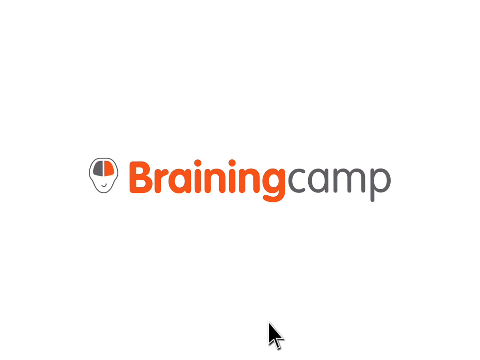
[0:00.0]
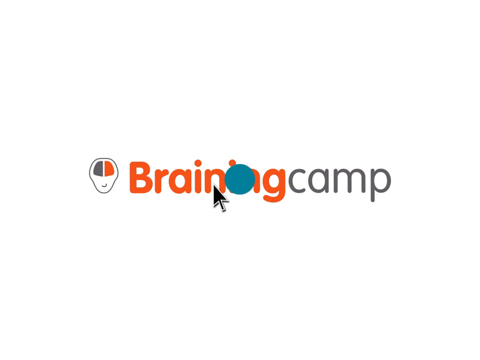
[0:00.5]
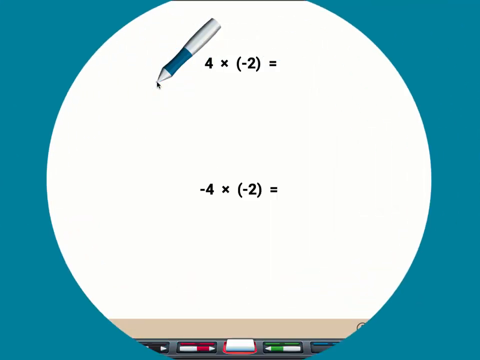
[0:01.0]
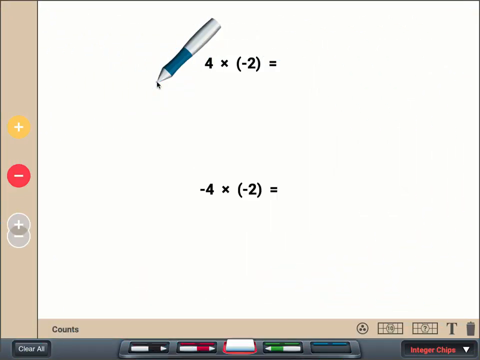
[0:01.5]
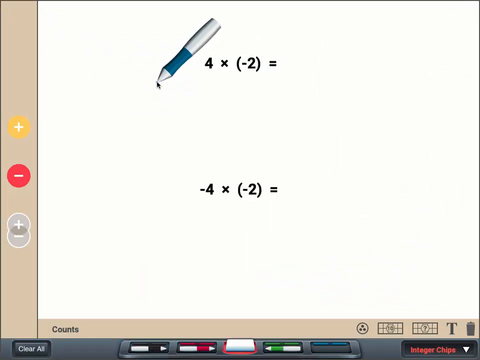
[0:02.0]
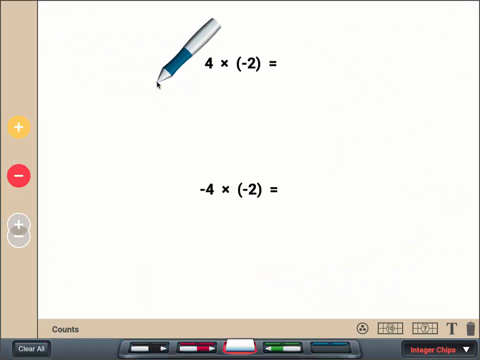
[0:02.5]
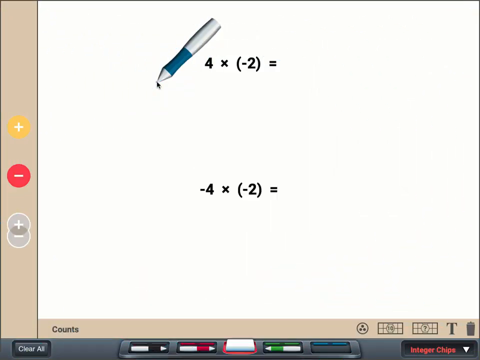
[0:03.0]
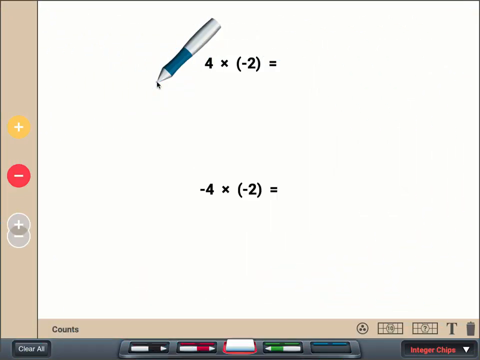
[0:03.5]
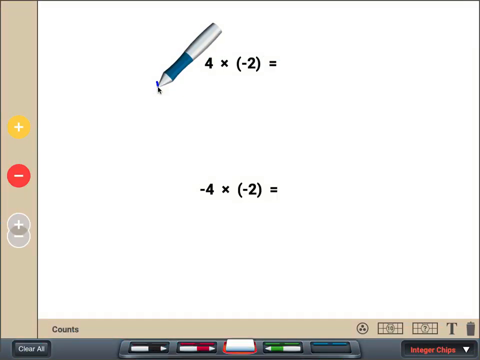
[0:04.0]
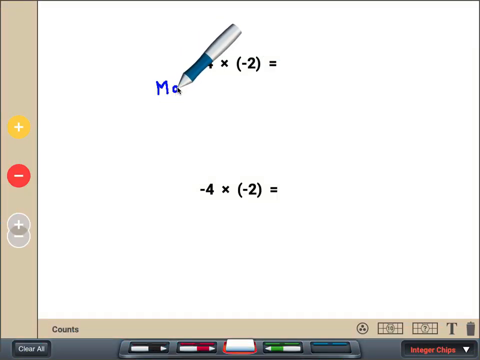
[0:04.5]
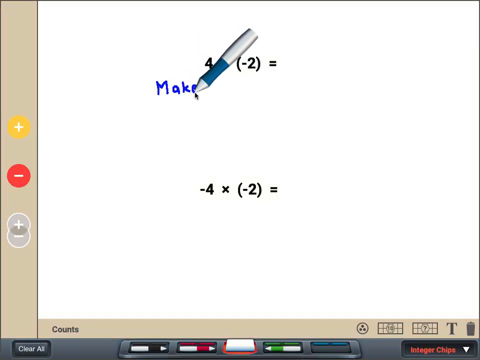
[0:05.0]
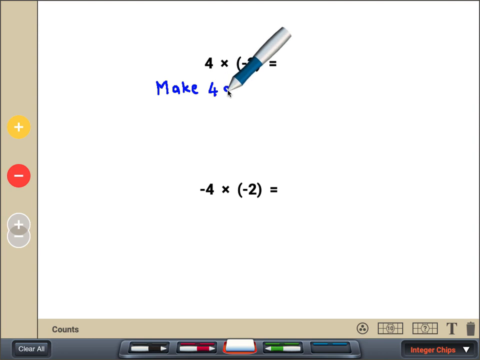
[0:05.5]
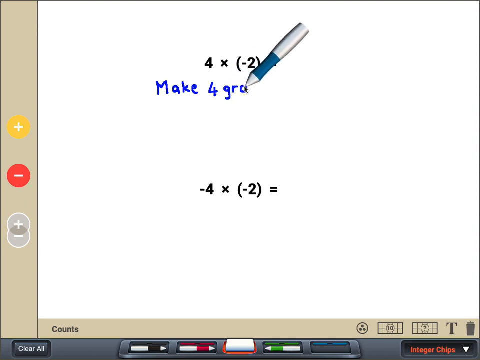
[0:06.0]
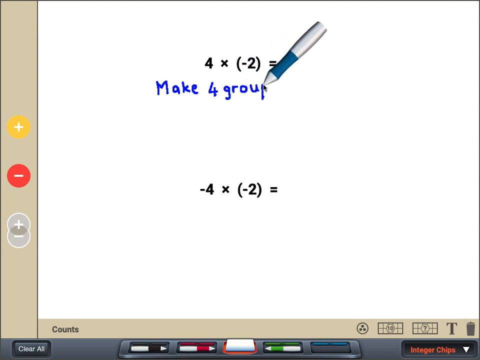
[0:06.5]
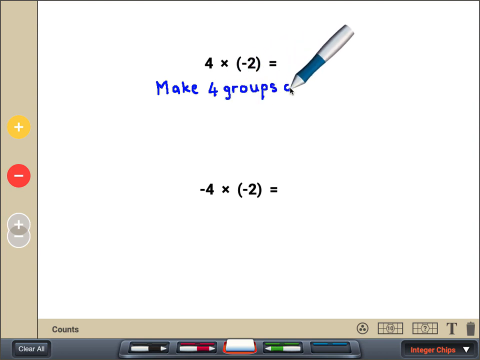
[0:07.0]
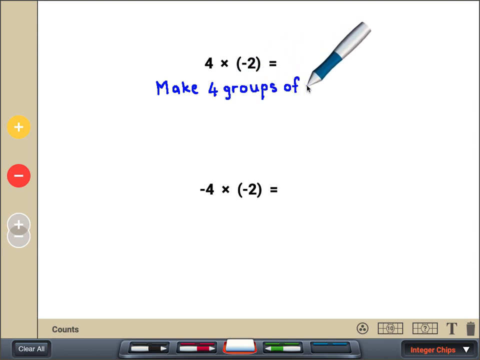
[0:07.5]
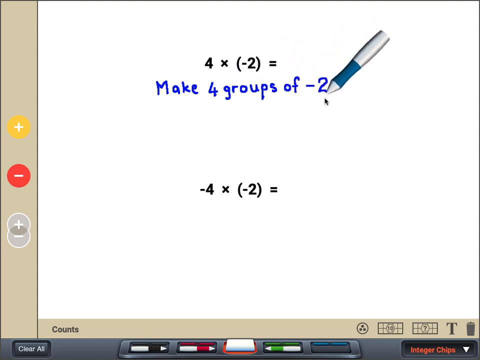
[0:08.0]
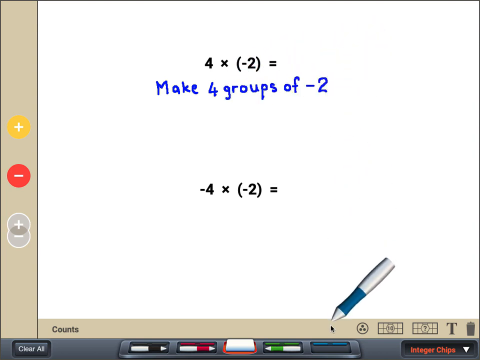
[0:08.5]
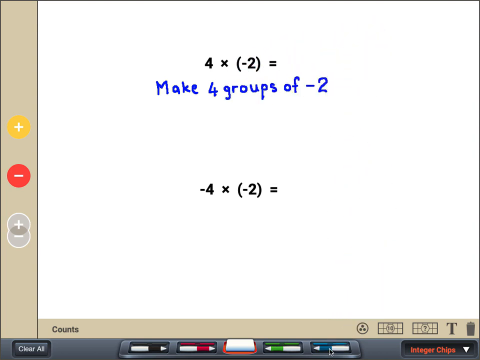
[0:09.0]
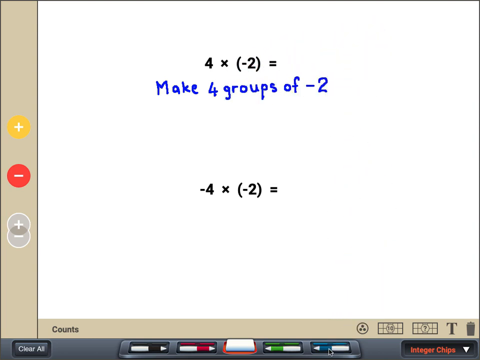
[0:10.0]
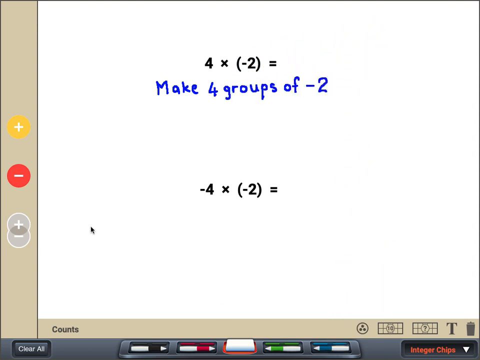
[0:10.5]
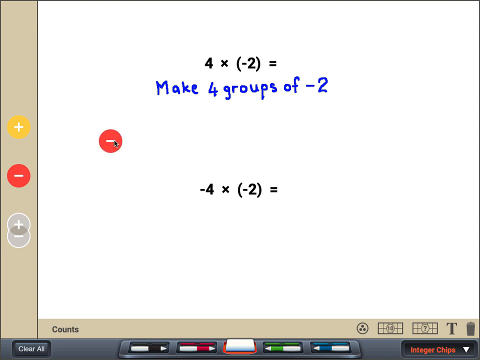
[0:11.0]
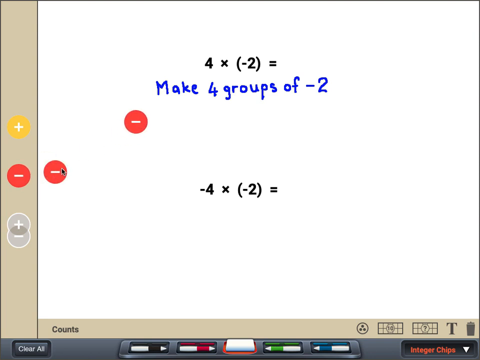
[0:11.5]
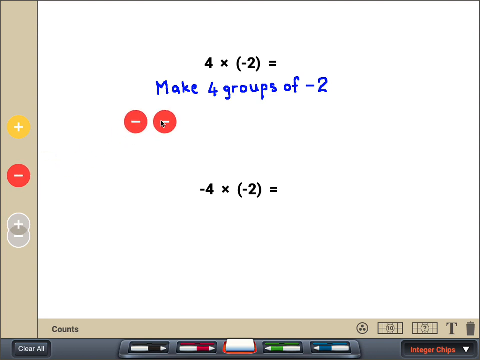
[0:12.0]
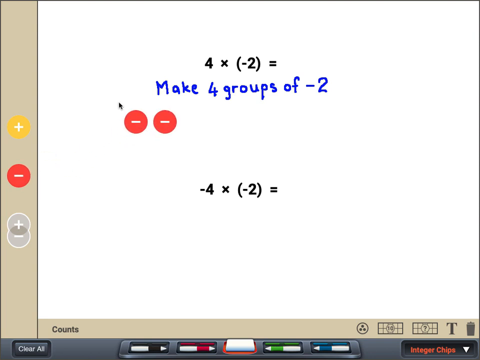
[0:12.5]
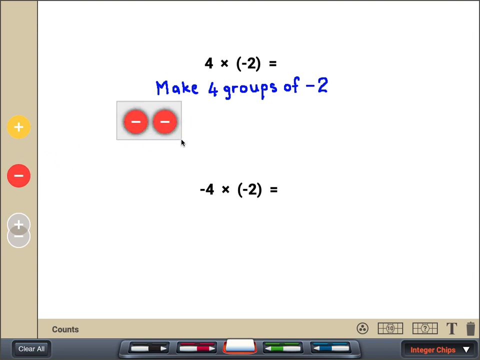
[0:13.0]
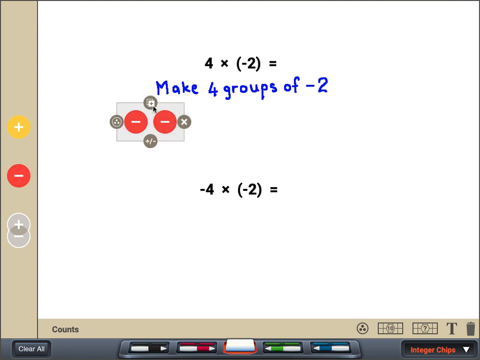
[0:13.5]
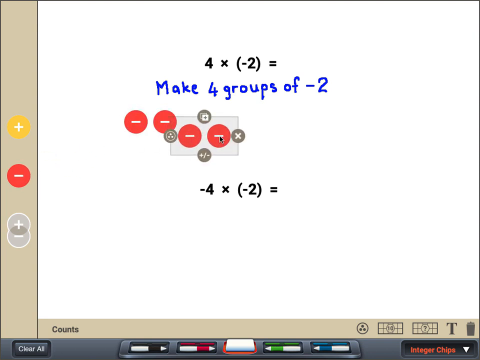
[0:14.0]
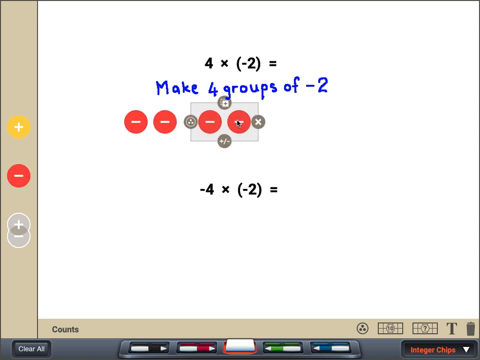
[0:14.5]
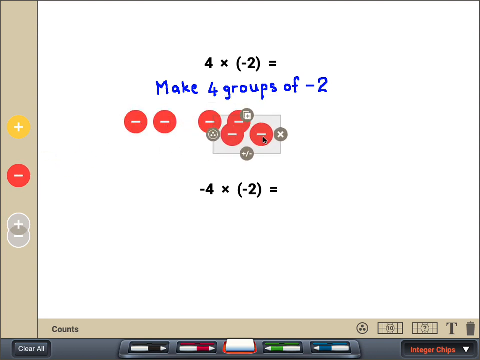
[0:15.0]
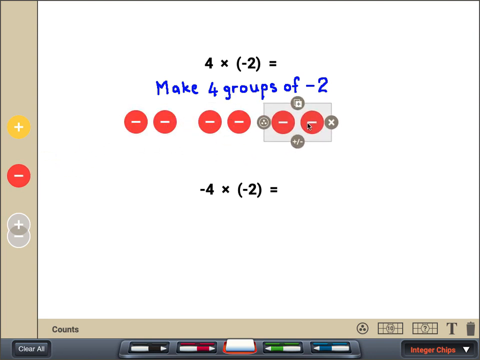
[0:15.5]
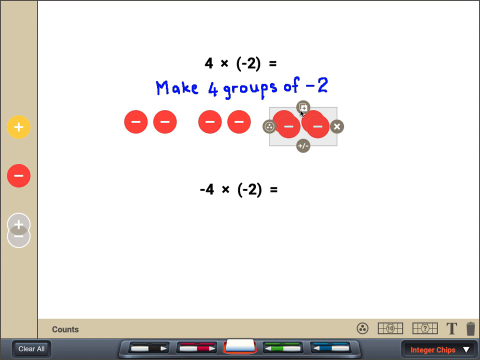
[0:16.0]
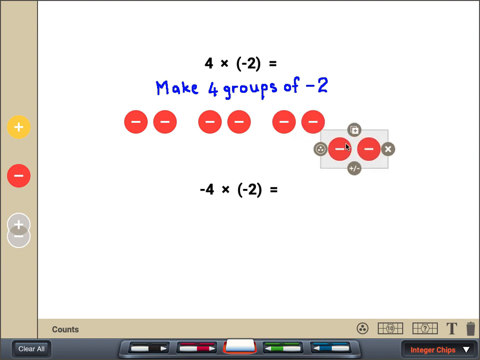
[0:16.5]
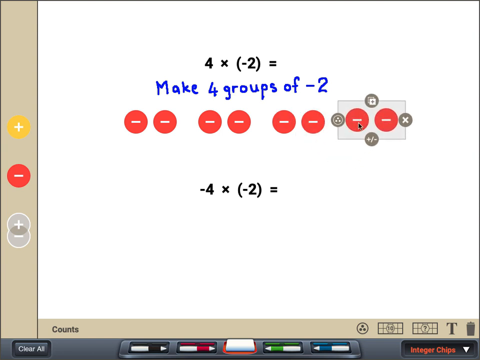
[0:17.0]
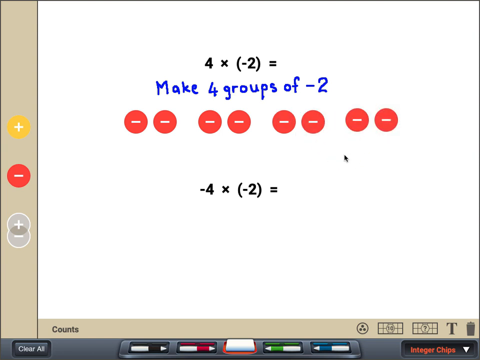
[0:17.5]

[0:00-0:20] On a white background is the text "Braining" in orange and "Camp" in gray, with a logo of an outline of a head containing two lobes of a brain, gray on the left and orange on the right. A comically large mouse cursor clicks on this image, triggering a transition in which a turquoise screen expands in a circular manner to reveal whiteboard-like text with two math problems overlaid on the screen. A very large digital pen is shown on the screen. The first line reads "4 × (−2) =" and the second line reads "−4 × (−2) =". The pen then writes on the screen in blue, drawing the text letter by letter: "make four groups of negative two" under the first math question. Negative icons in red circles are dragged in from the side of the screen and then copied and pasted four times to make four groups of the negative symbol.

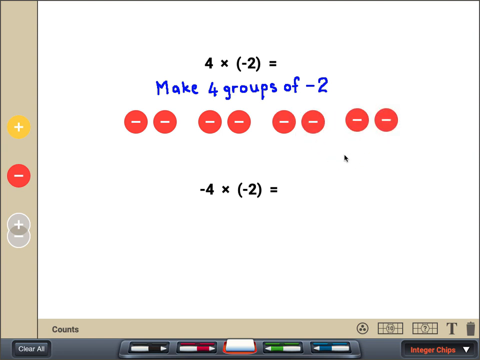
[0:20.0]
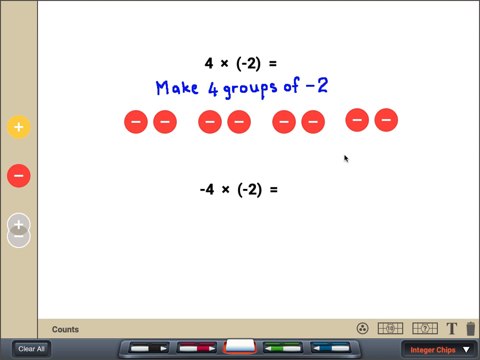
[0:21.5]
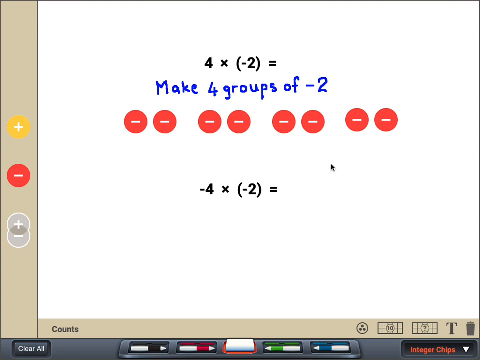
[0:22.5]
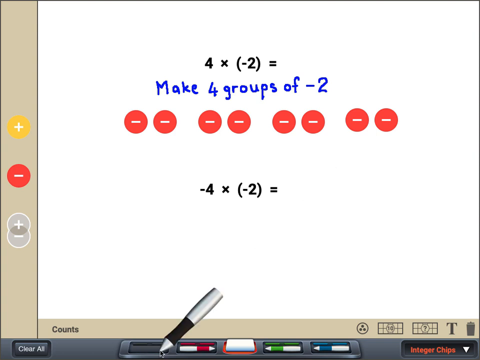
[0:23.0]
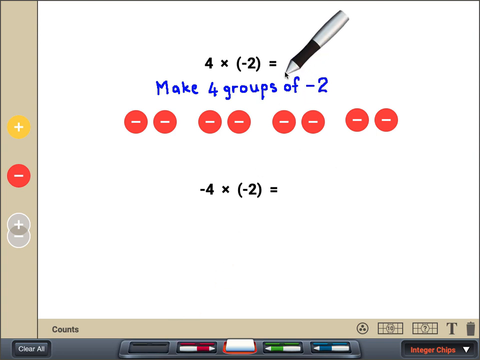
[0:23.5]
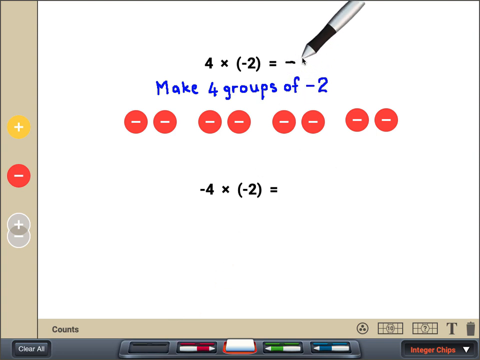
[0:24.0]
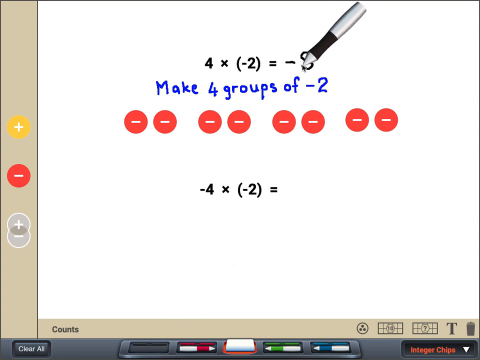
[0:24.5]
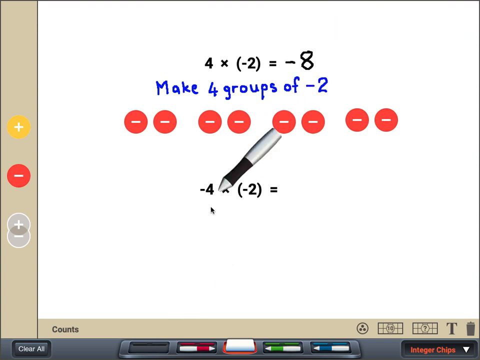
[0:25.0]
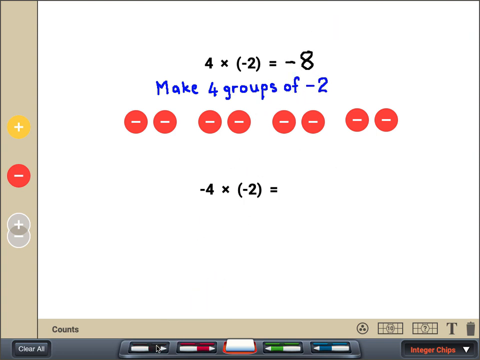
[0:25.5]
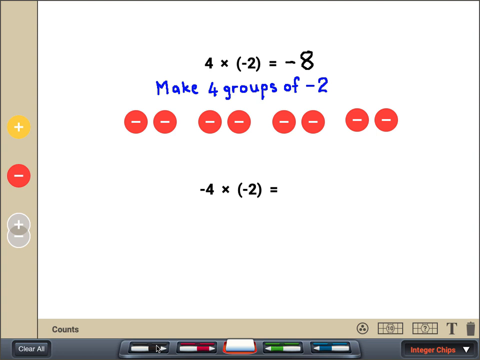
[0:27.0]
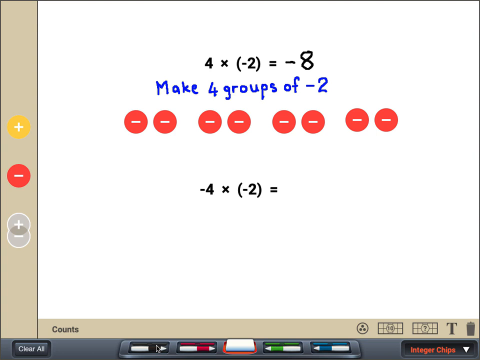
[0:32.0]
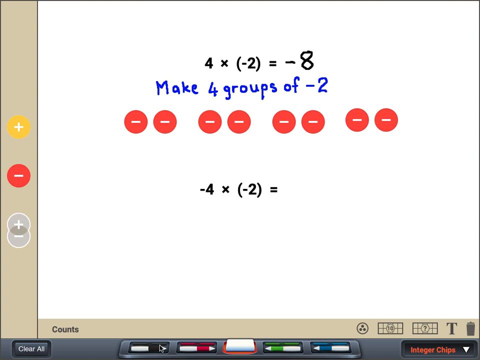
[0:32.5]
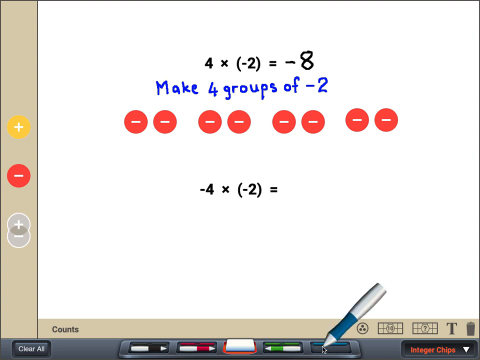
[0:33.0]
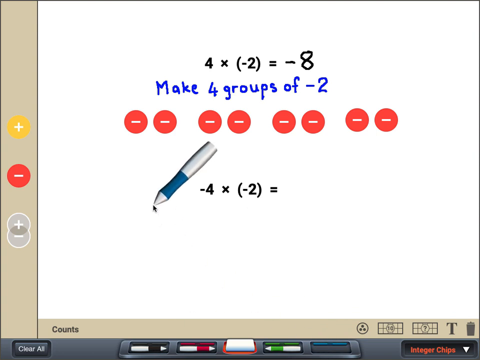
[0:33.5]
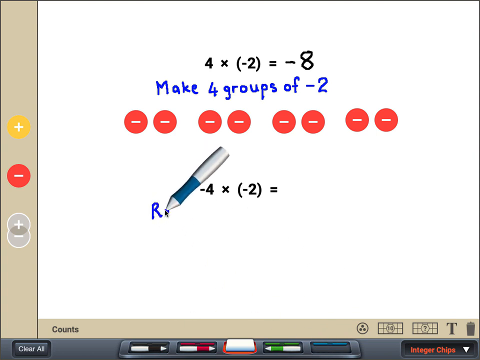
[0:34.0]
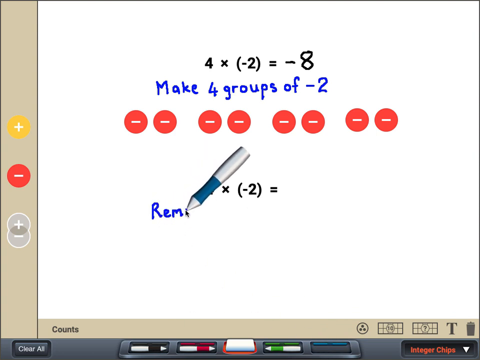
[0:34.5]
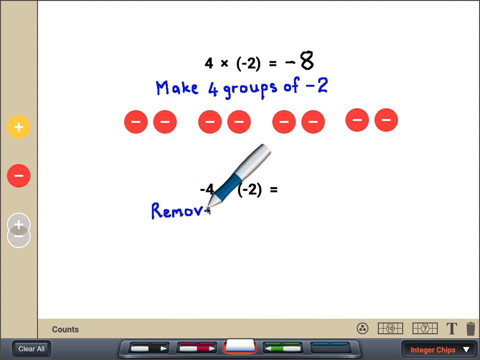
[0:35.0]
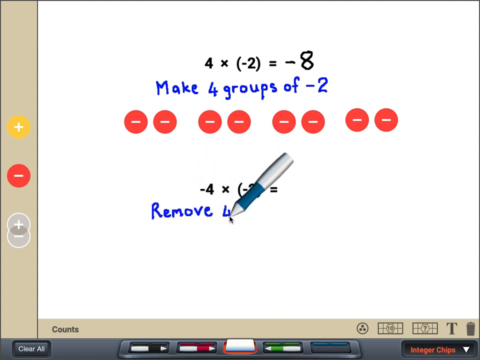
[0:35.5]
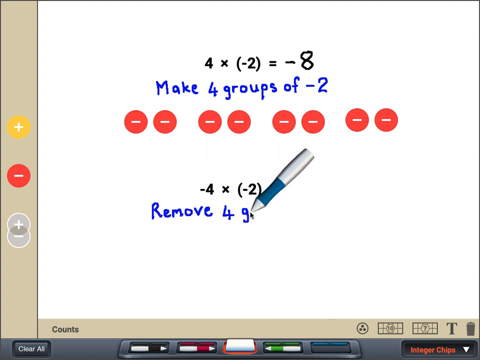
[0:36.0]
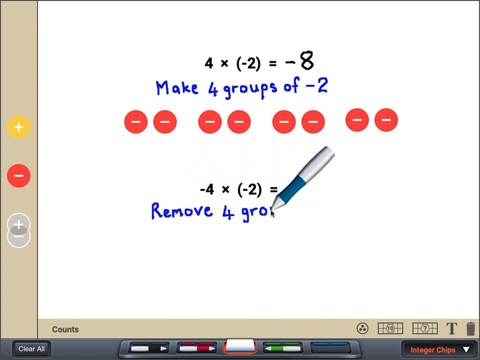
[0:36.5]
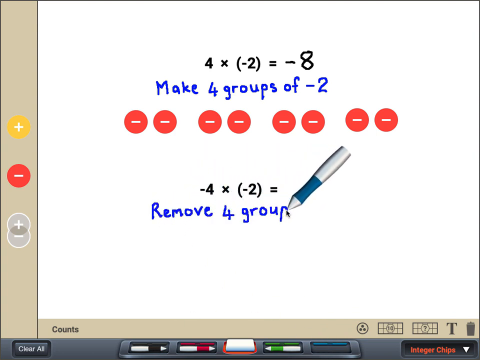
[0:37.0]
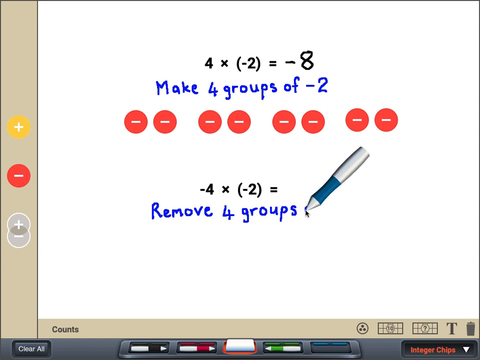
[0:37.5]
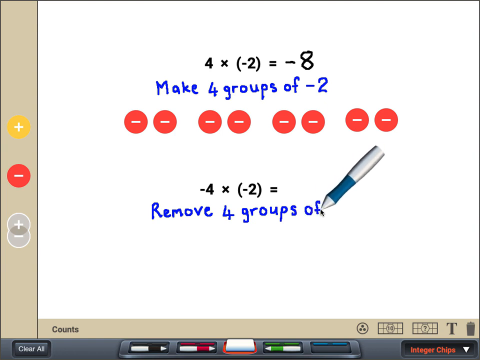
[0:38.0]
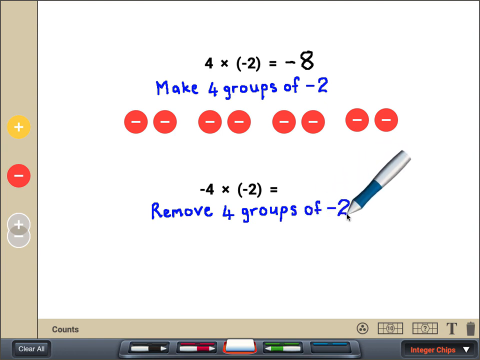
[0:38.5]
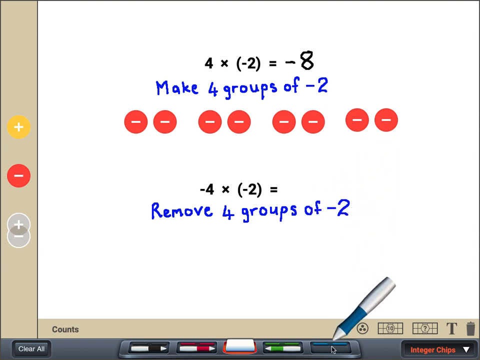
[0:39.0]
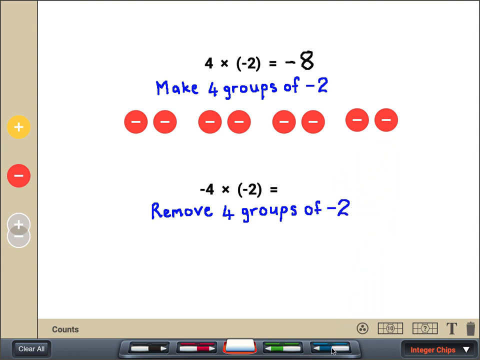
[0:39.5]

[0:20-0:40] Four groups of negative two have been drawn onto the screen with the help of the icons on the left. There are four groups of red circles, each with a negative sign in it, likely a visual representation of four times negative two. "−8" is written into the answer line in black marker. The marker then changes to blue again and draws text onto the screen underneath the second question, reading "remove four groups of negative two", seemingly translating the equation into words.